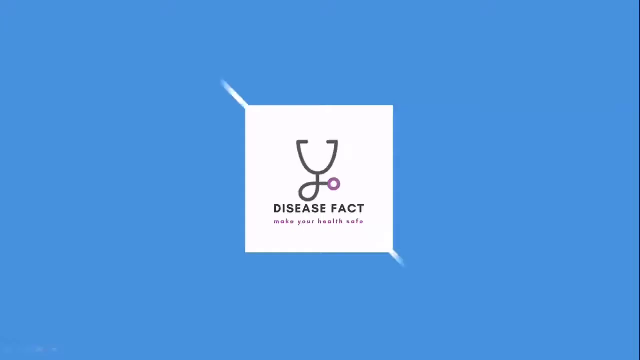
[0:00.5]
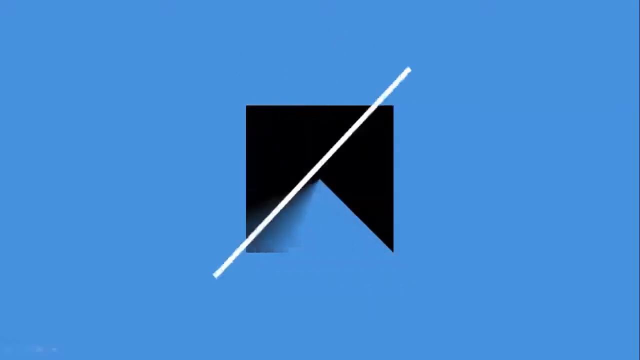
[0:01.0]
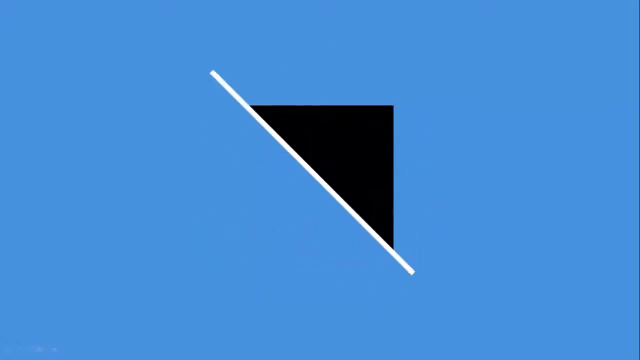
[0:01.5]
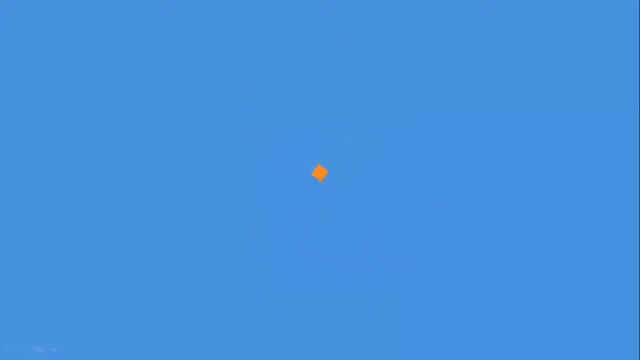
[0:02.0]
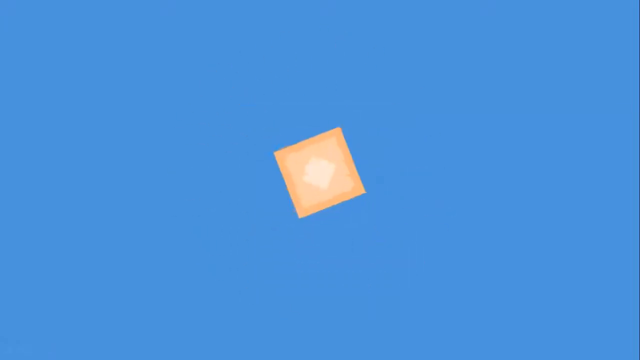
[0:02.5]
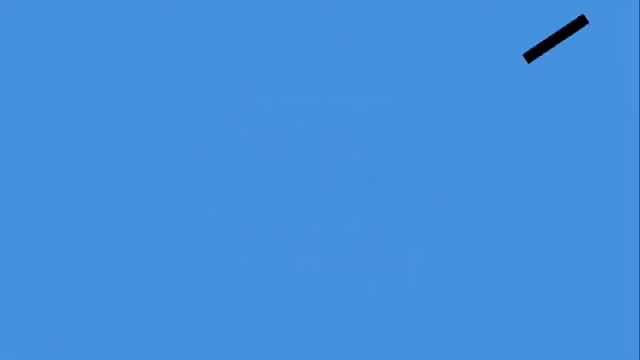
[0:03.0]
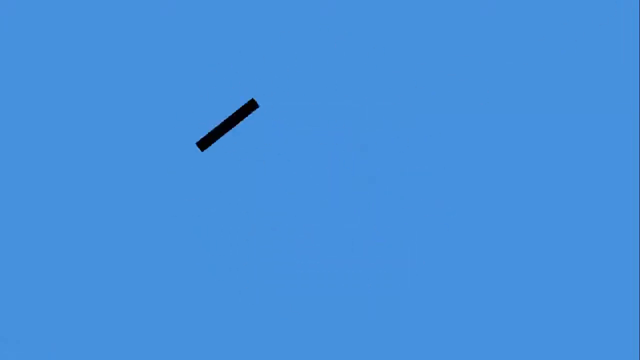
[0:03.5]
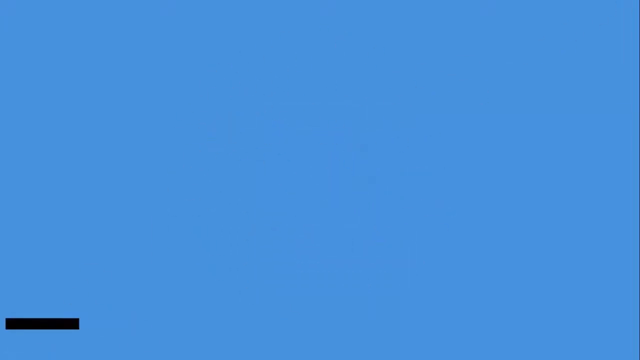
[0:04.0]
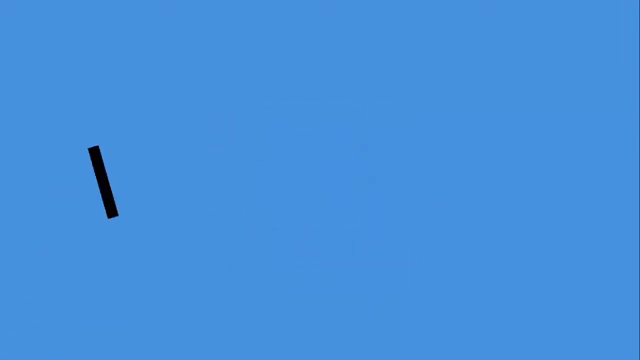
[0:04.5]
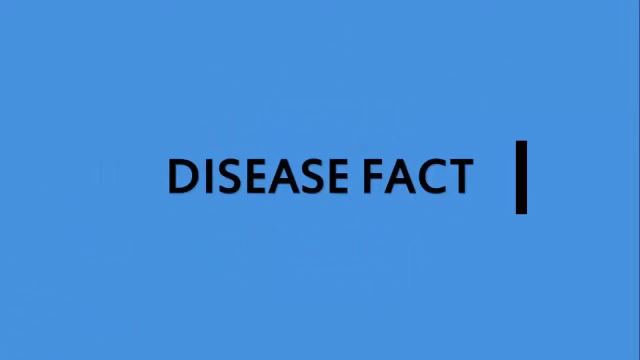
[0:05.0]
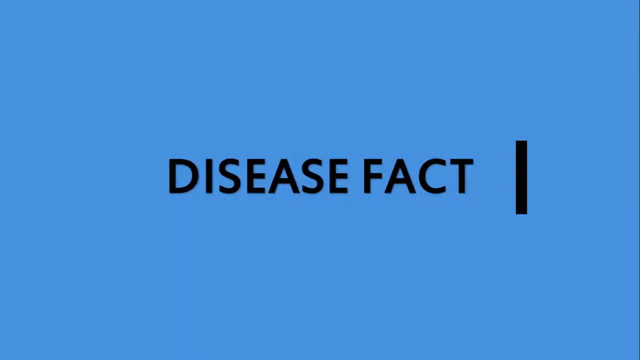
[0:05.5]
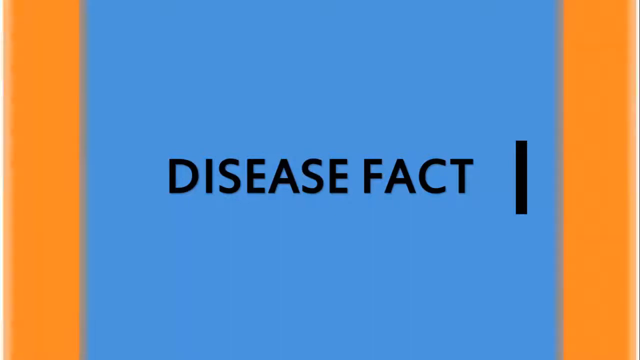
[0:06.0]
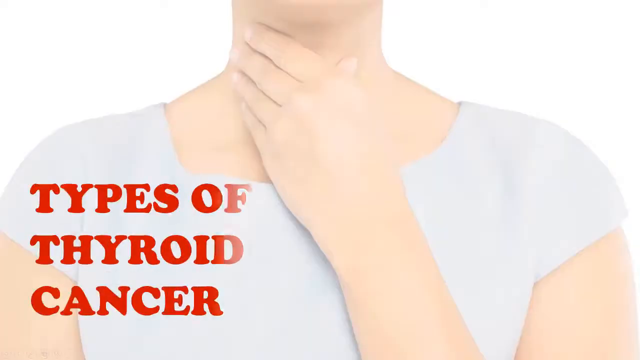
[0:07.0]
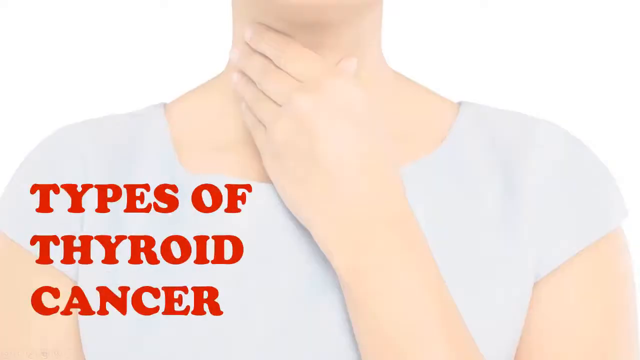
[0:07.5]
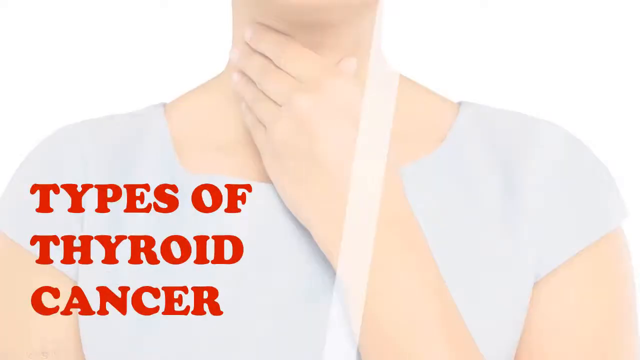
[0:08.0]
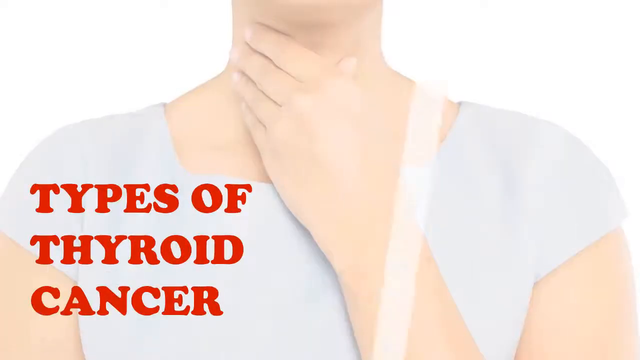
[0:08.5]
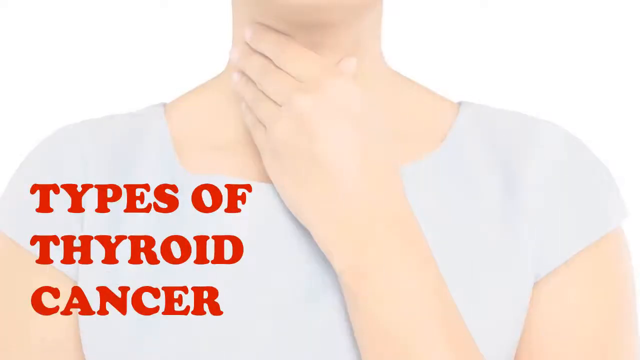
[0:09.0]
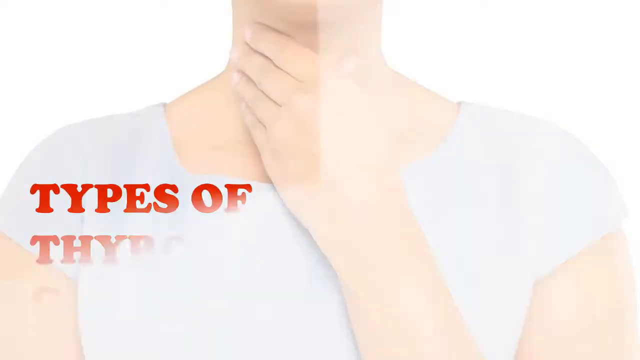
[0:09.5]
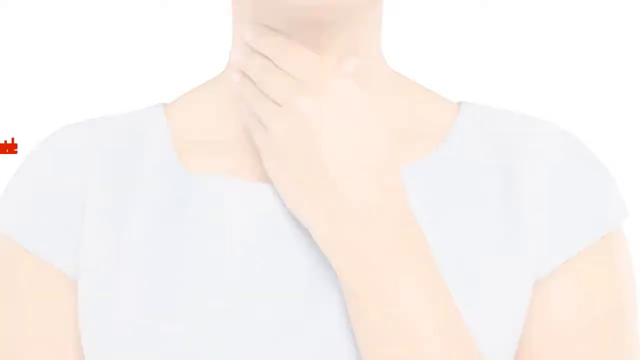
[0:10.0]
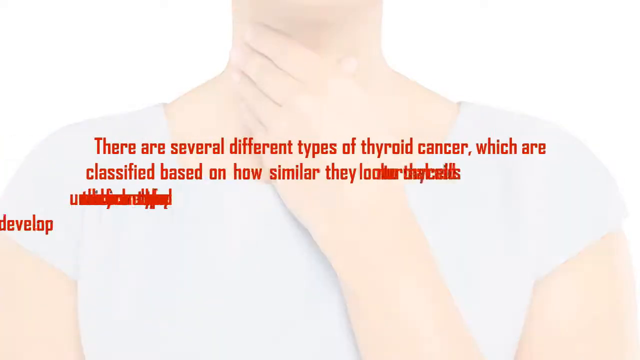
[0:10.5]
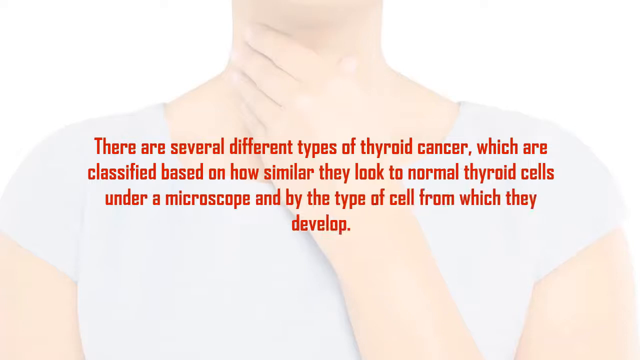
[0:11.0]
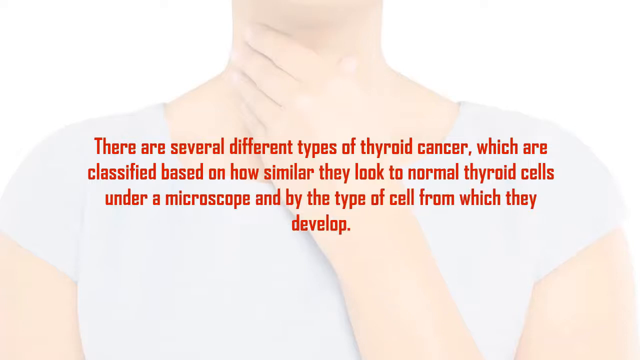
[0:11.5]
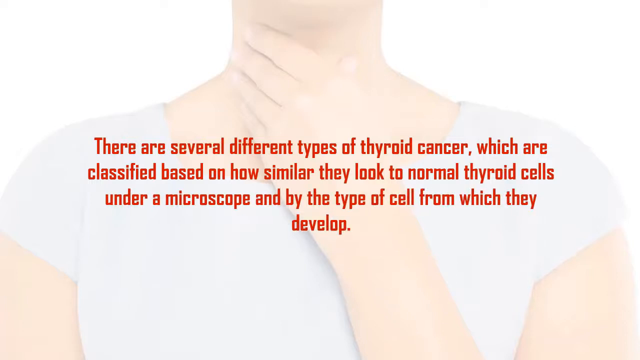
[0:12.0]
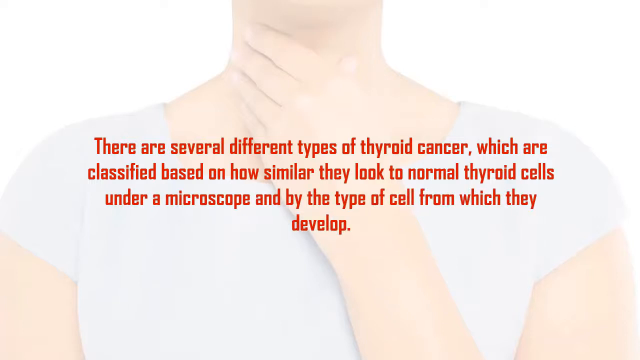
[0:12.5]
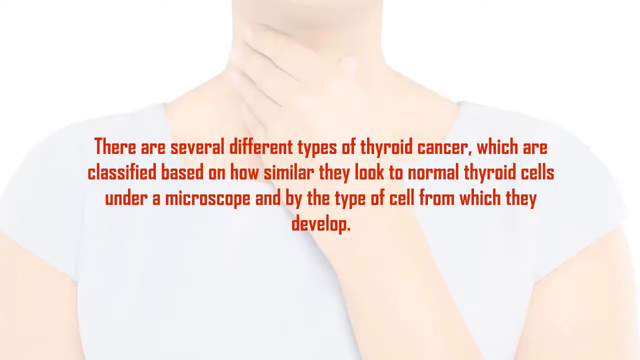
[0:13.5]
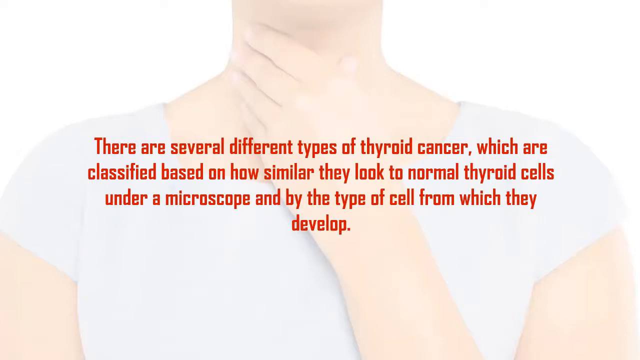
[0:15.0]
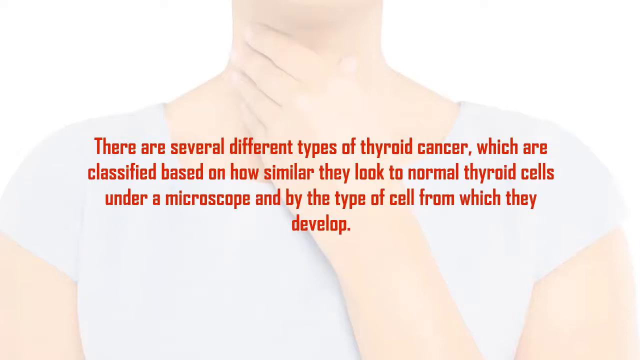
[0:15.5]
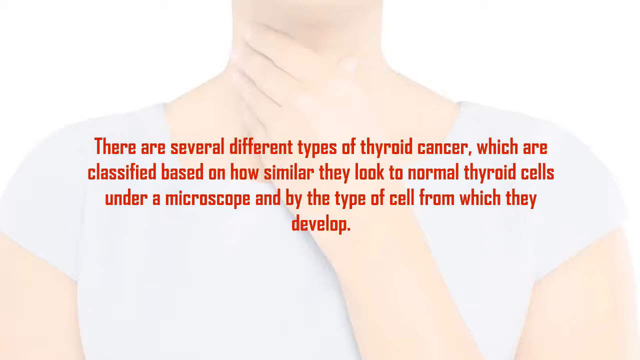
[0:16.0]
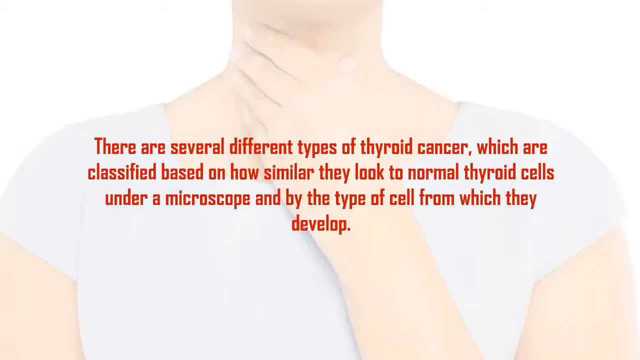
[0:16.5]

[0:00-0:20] A blue screen with digitally created geometric shapes opens the video, and dark blue text in the center reads "Disease Fact 1." The screen closes very rapidly, as if a curtain is closing, done digitally, and opens onto an illustration of a Caucasian woman seen from the chest up to the chin. A hand, her left hand, comes up and crosses over her throat. The image looks like a digitally enhanced illustration or possibly AI. The woman wears a white, short-sleeved boat-neck t-shirt, and bold red text in the lower left corner reads "types of thyroid cancer." A zippy circular motion in white follows, opening onto the same image of the woman holding her throat with her left hand, now with red text reading "there are several different types of thyroid cancer."